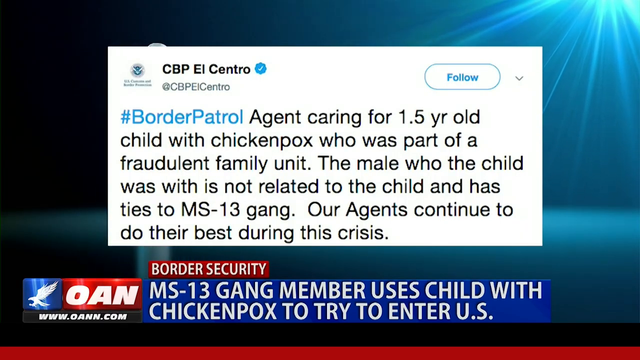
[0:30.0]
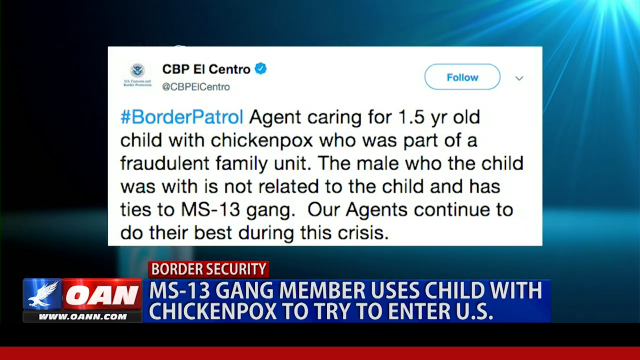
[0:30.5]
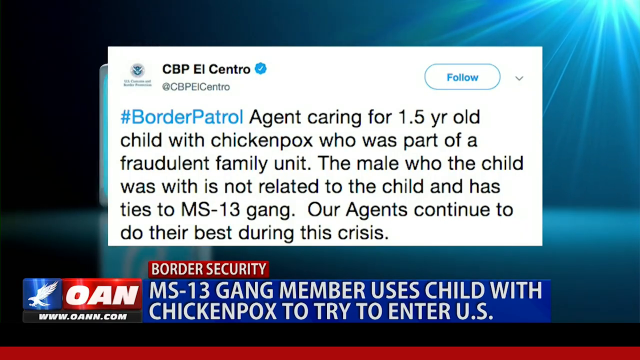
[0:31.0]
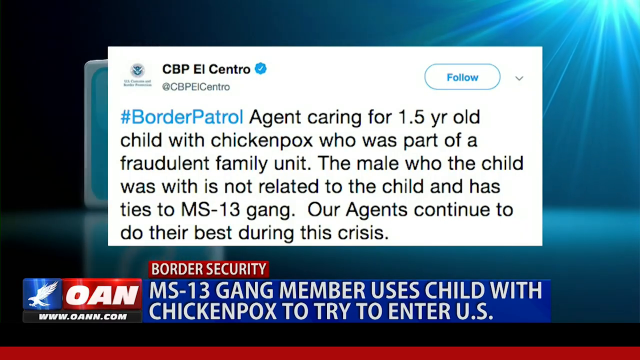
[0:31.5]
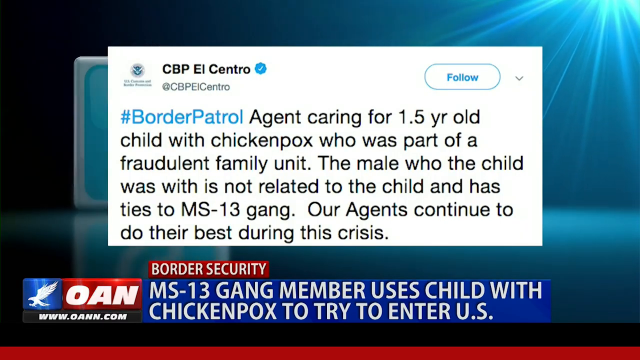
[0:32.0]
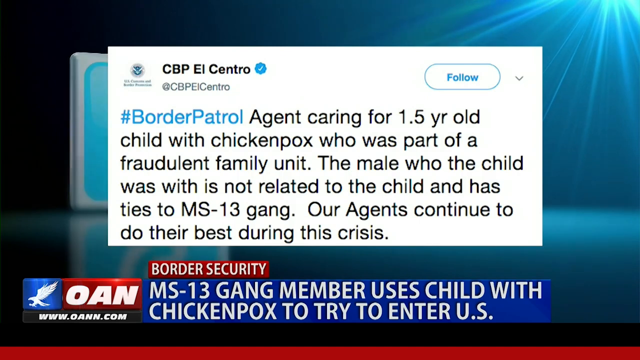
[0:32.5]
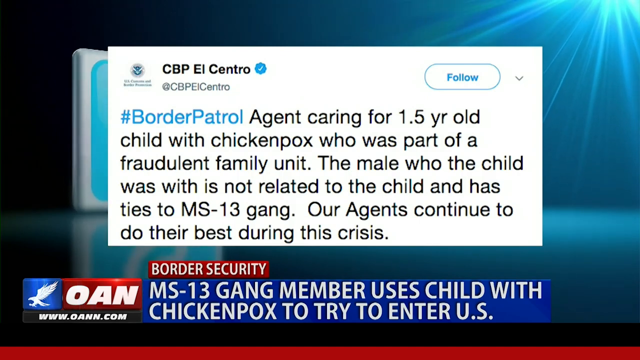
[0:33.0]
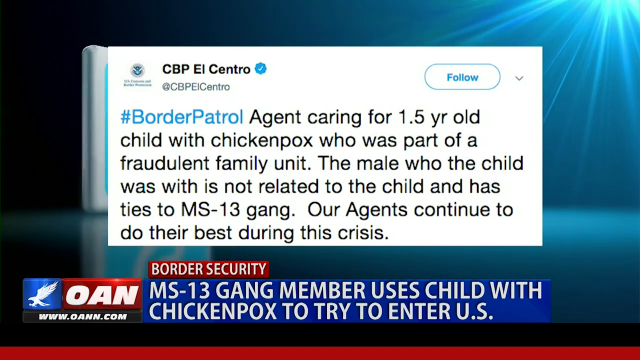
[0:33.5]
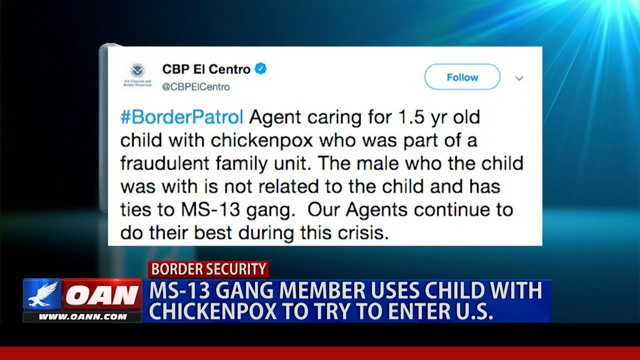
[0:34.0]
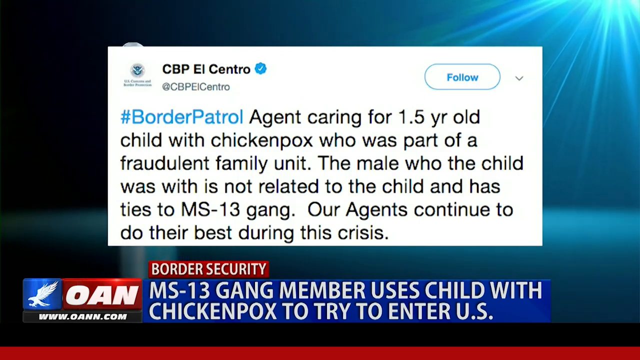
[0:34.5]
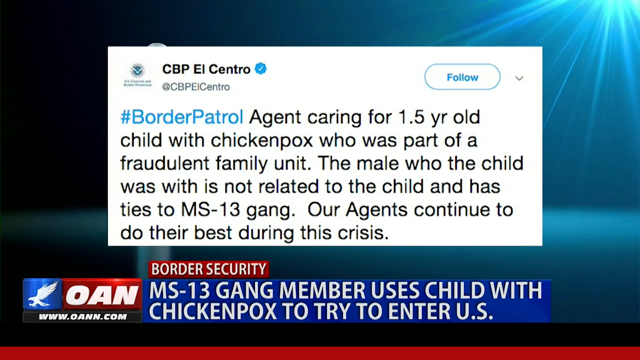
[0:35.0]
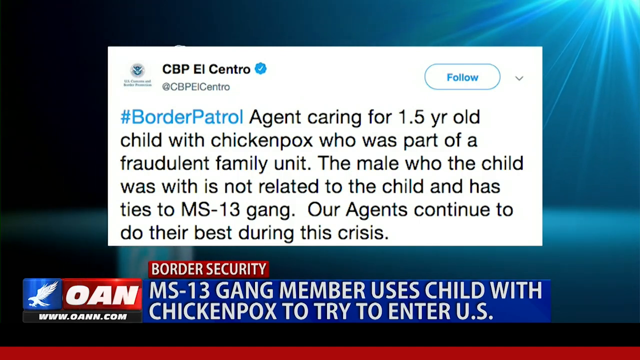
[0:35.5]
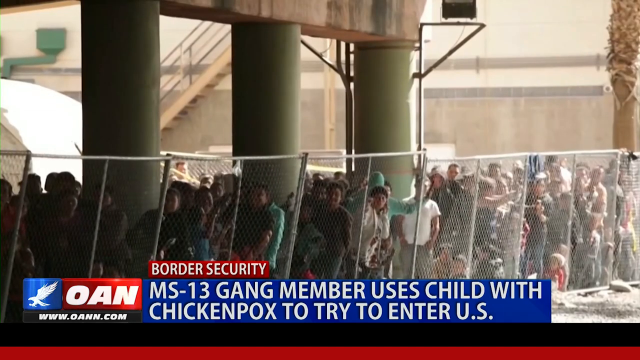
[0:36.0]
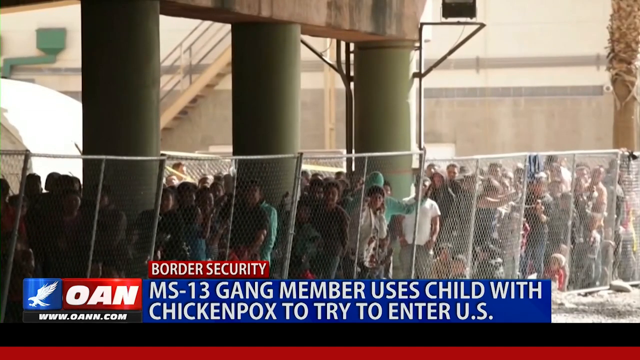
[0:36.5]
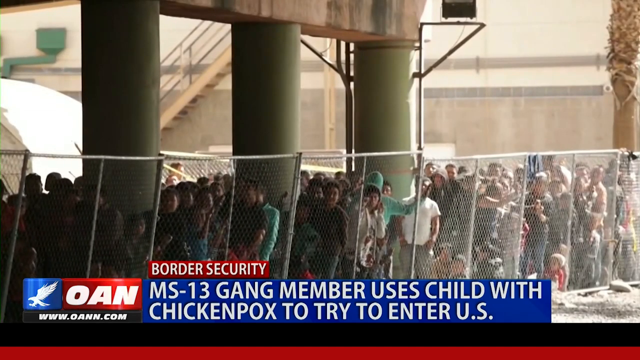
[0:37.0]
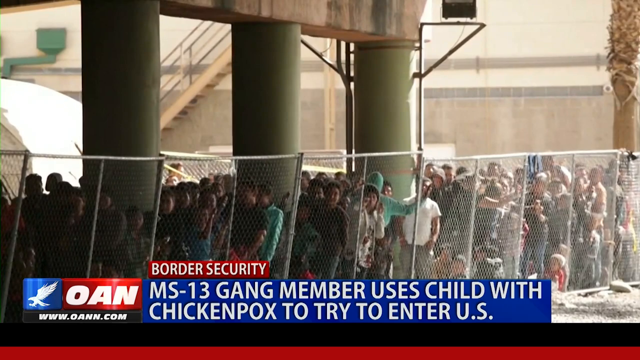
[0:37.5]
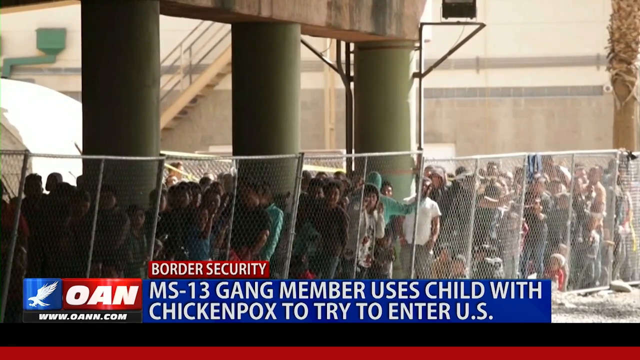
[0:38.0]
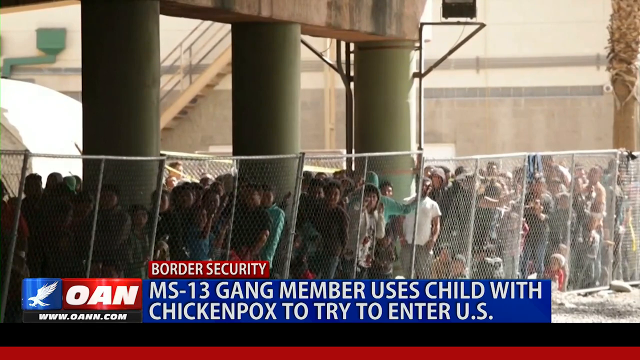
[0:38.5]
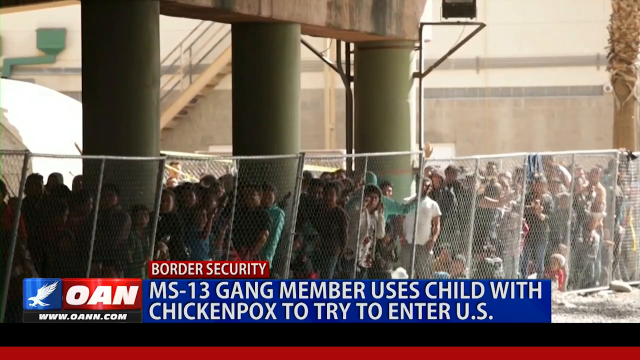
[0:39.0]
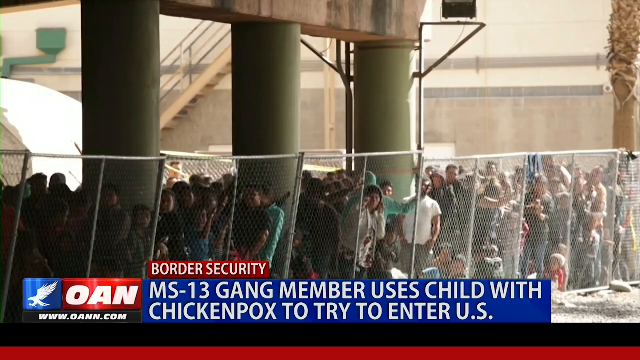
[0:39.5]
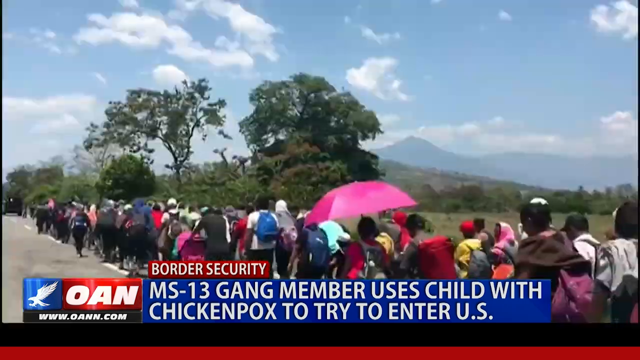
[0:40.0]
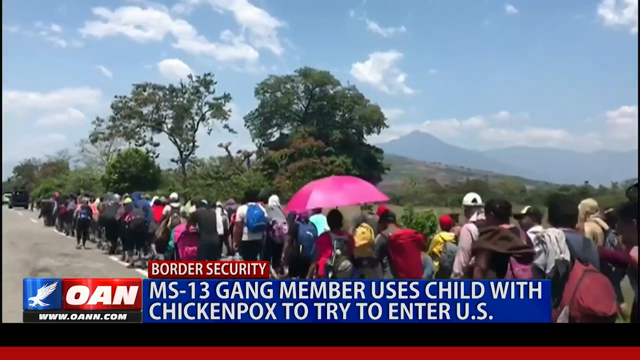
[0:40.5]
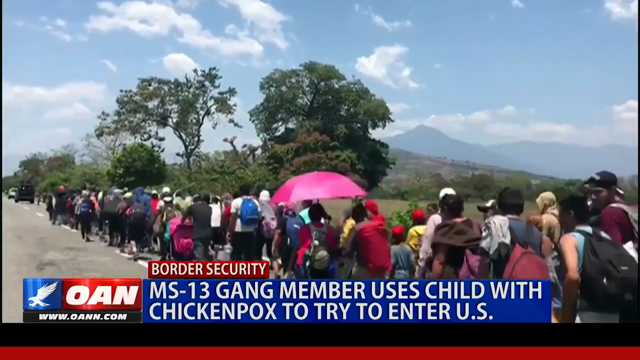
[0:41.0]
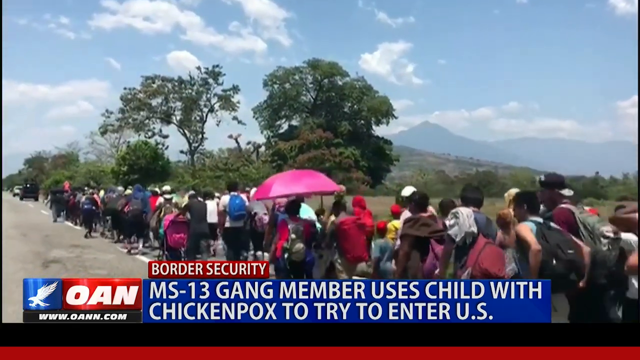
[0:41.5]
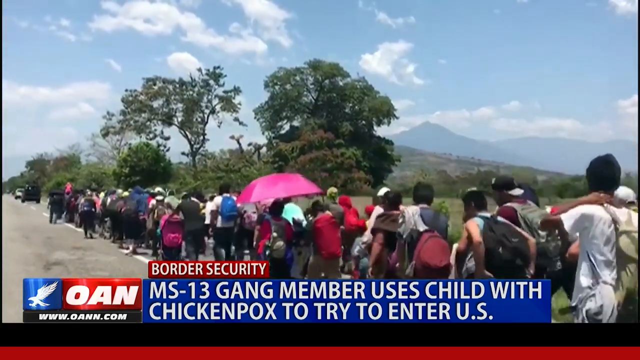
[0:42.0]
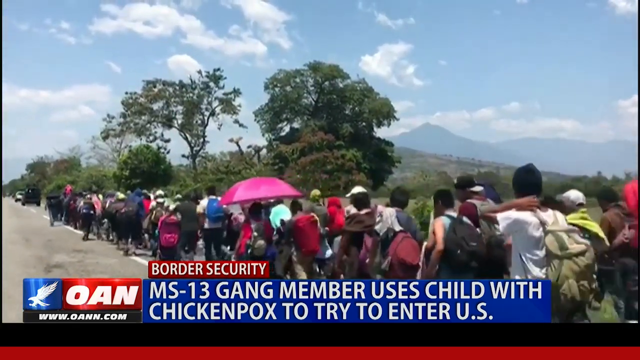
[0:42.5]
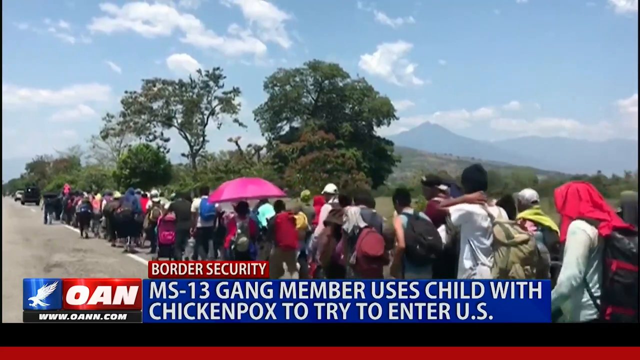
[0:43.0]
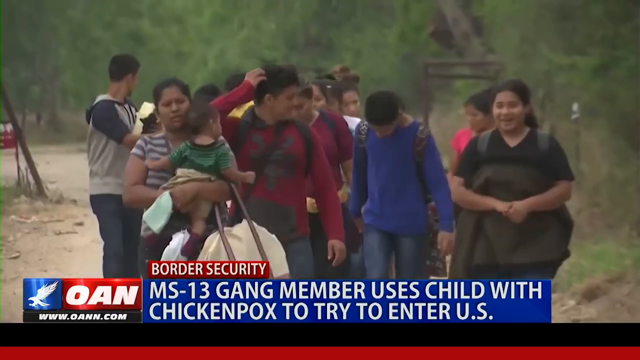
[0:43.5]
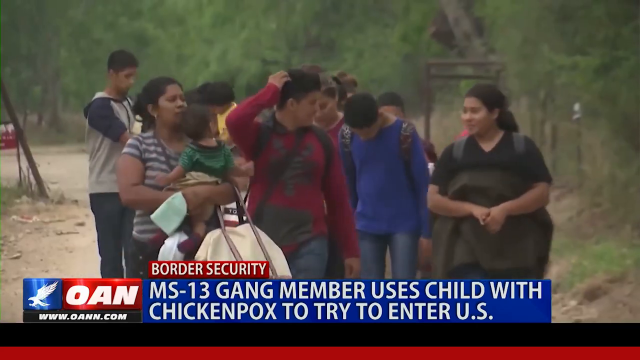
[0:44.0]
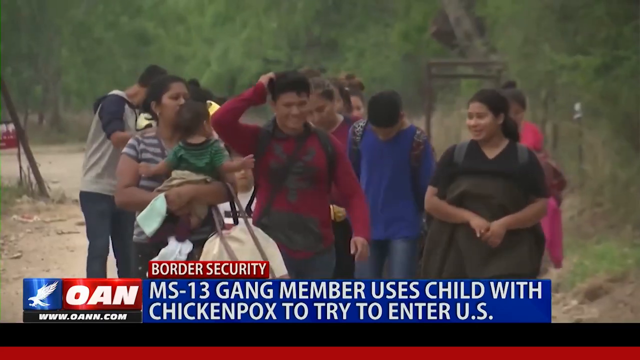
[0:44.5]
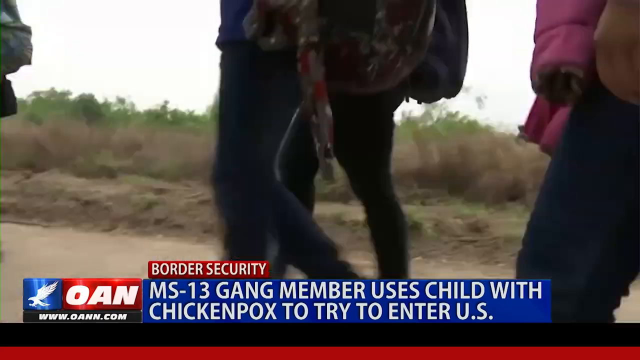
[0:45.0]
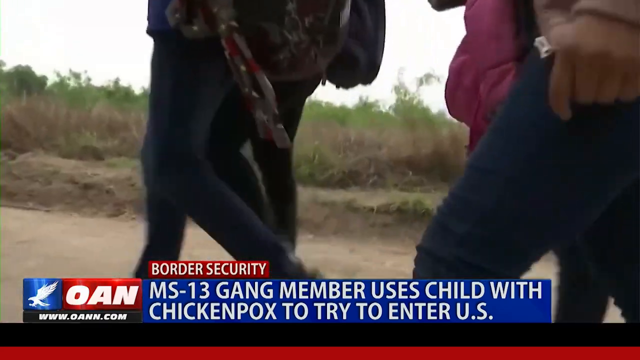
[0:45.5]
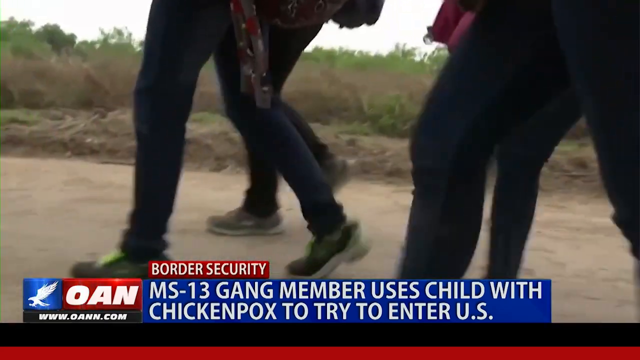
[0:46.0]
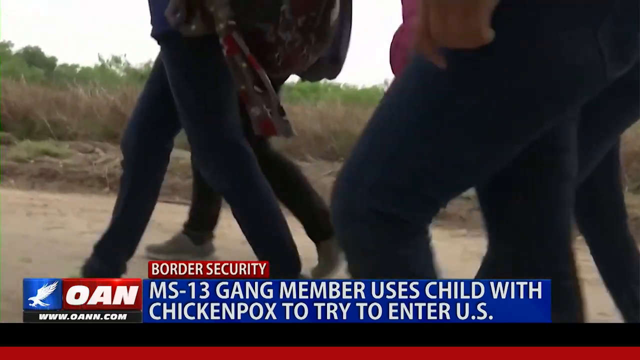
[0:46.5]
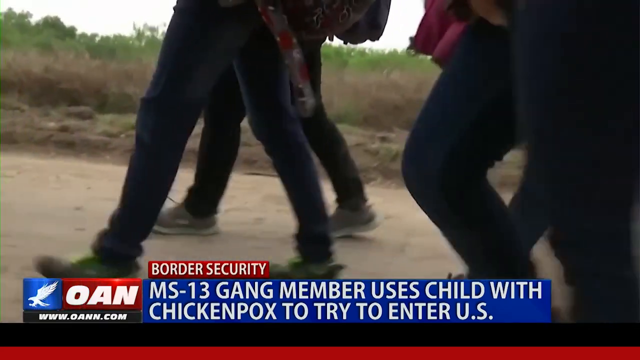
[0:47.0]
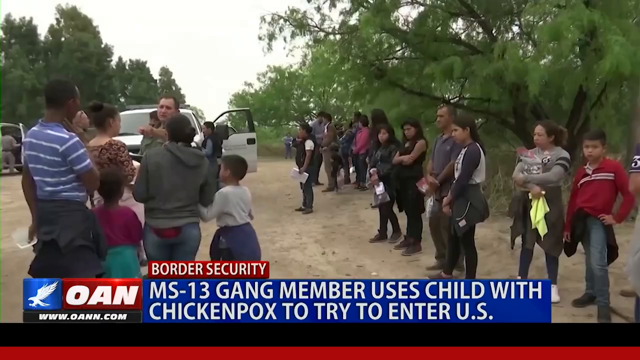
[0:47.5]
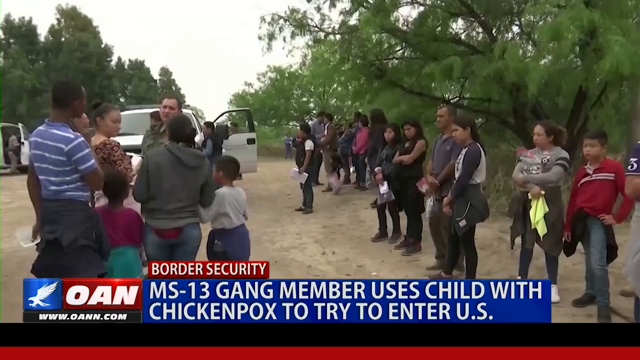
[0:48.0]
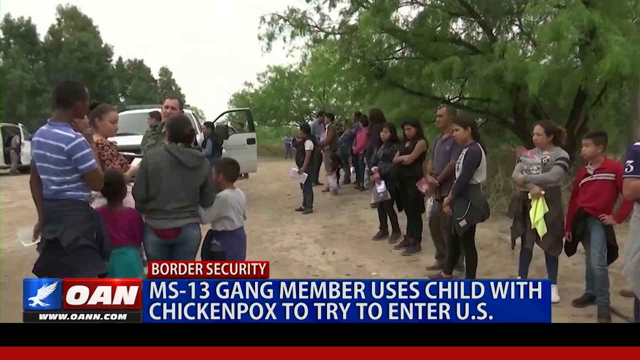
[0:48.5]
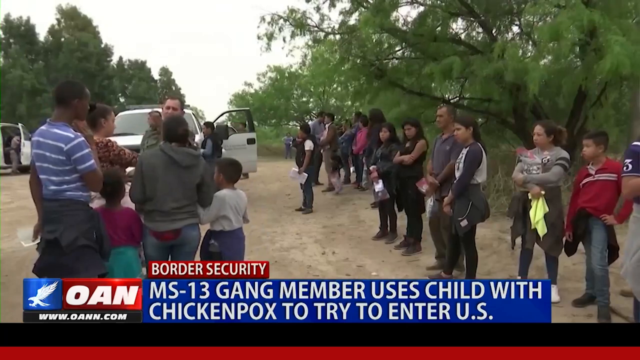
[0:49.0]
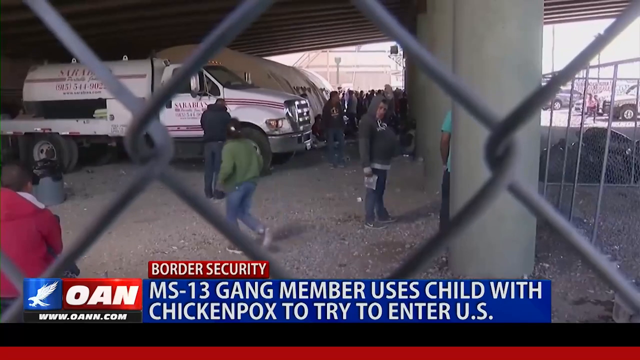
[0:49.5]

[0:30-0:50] Text appears on screen: "Border patrol agent caring for one and a half year old child with chicken pox who was part of a fraudulent family unit. The male who the child was with it's not related to the child and has ties to Ms. 13 gang. our agents continue to do their best during this crisis". The text reads "follow" along with what looks like "CBP L-Central", probably from Twitter. The footage shows a large crowd standing at a fence at the border, and many people walking down the road, laughing and smiling, wearing nice clean clothes. The border footage is of decent quality, and the piece is an OAN news story.